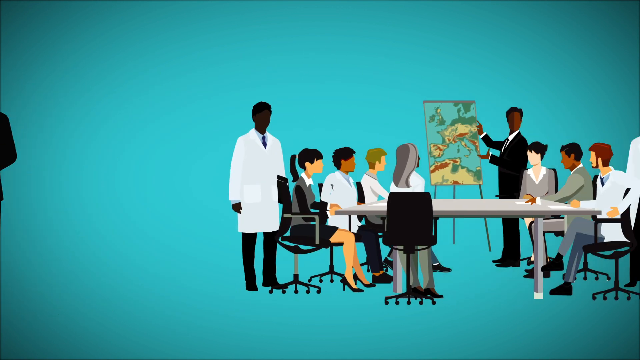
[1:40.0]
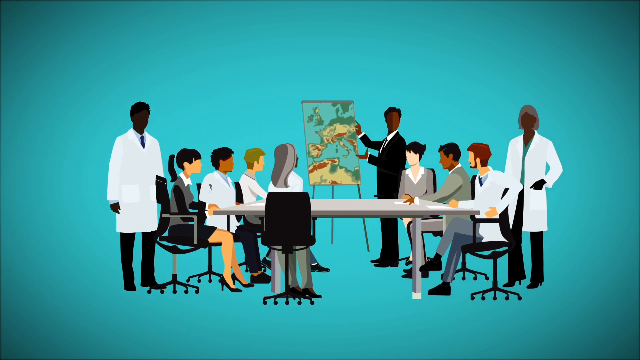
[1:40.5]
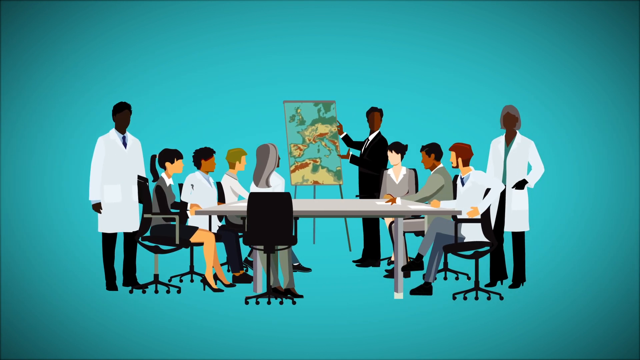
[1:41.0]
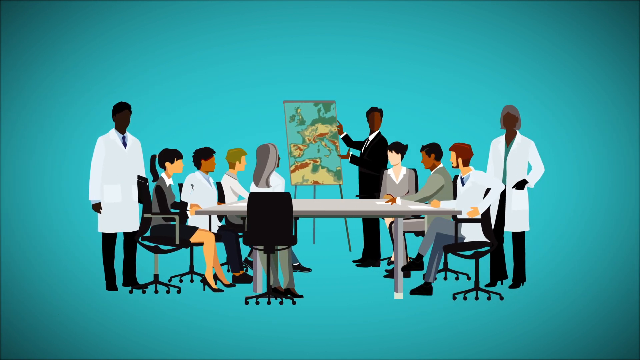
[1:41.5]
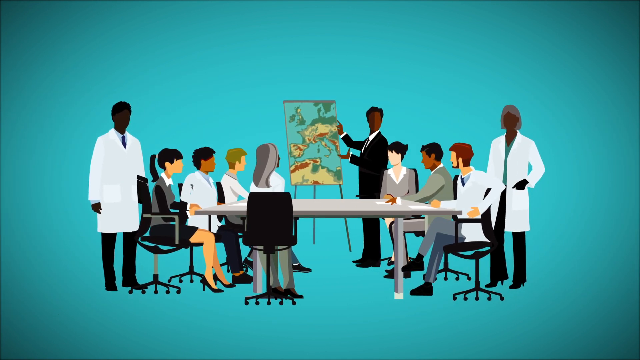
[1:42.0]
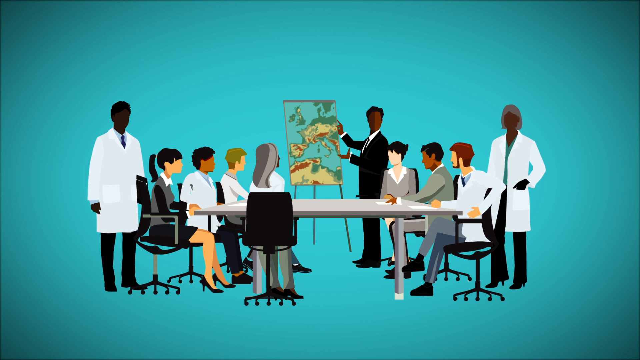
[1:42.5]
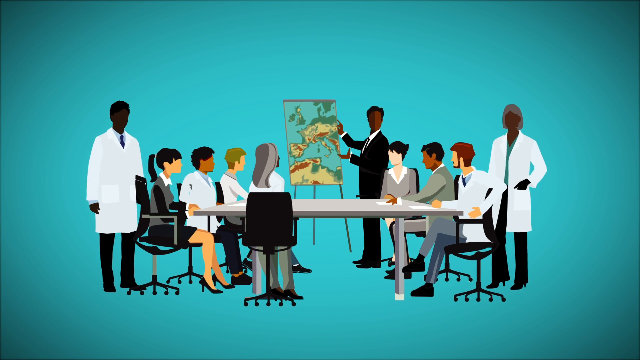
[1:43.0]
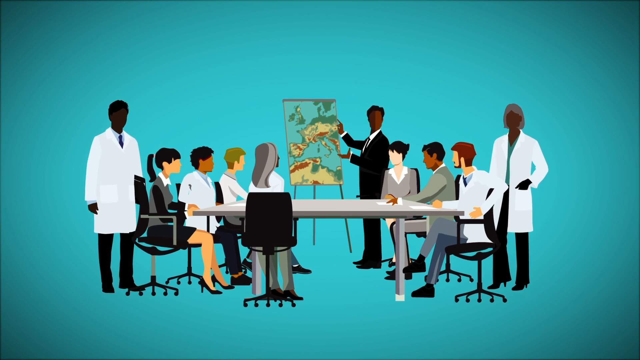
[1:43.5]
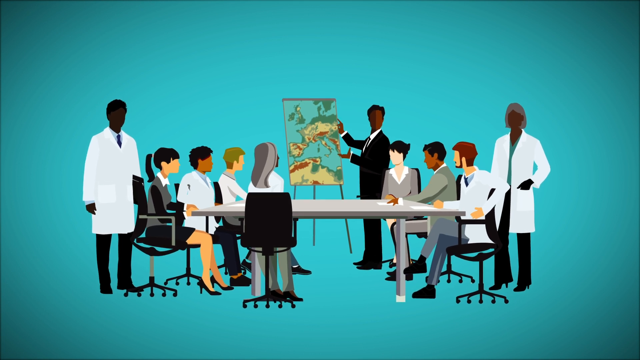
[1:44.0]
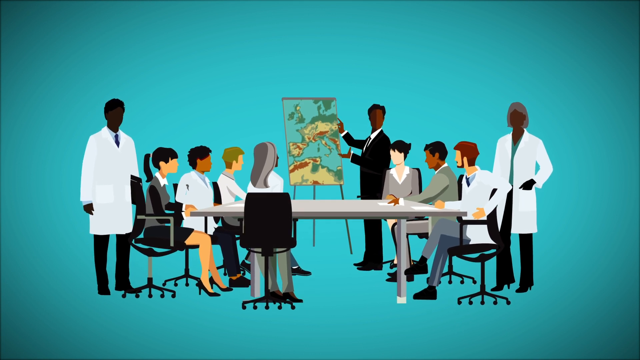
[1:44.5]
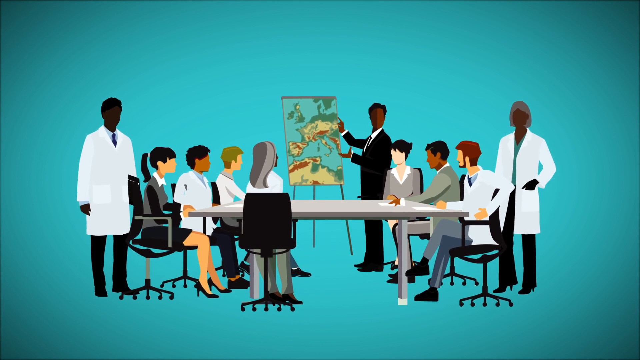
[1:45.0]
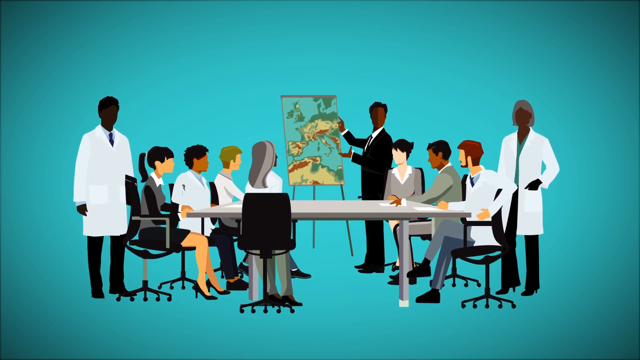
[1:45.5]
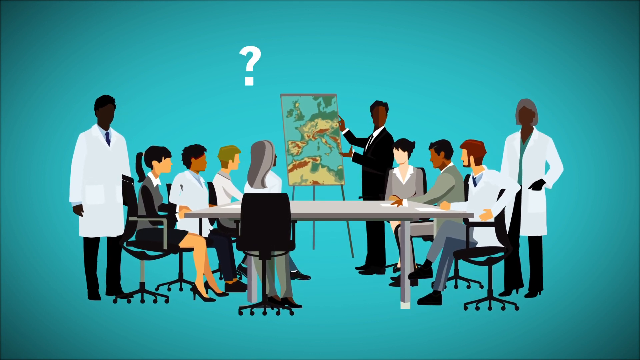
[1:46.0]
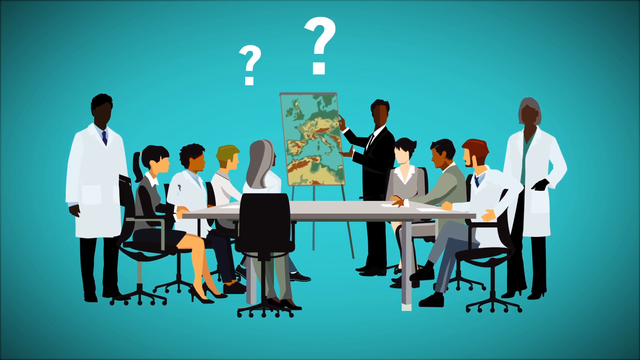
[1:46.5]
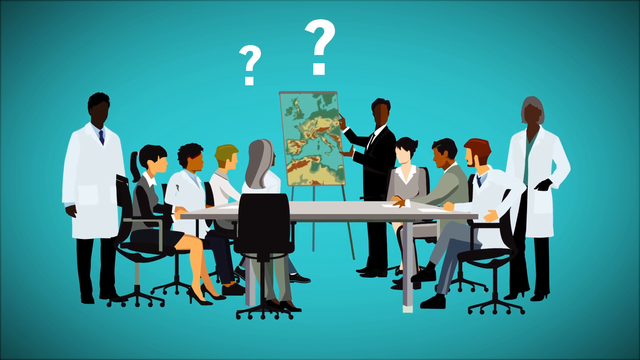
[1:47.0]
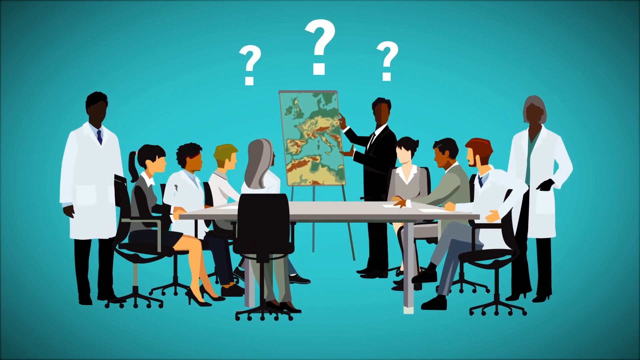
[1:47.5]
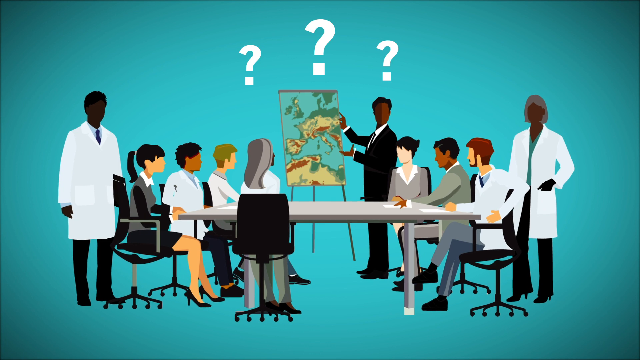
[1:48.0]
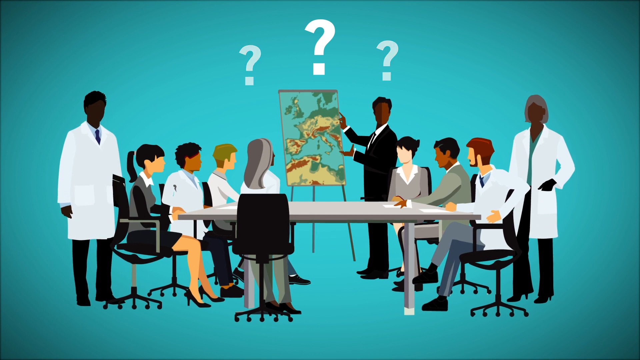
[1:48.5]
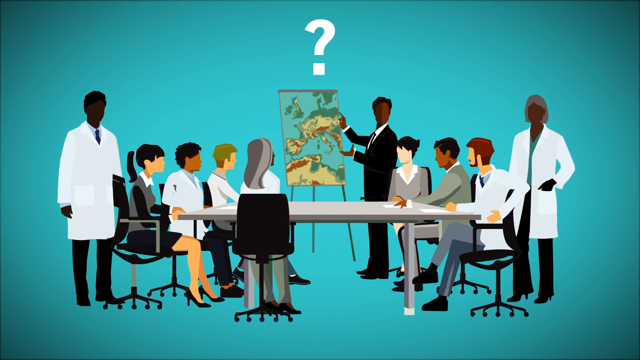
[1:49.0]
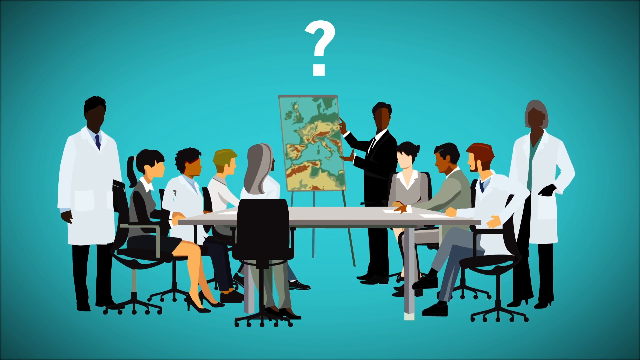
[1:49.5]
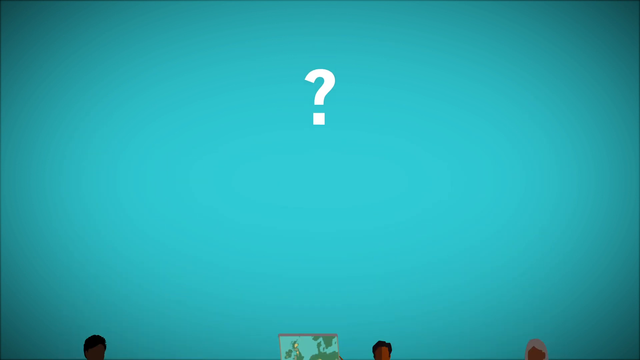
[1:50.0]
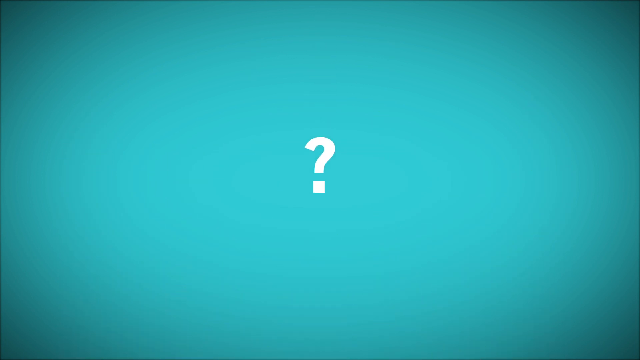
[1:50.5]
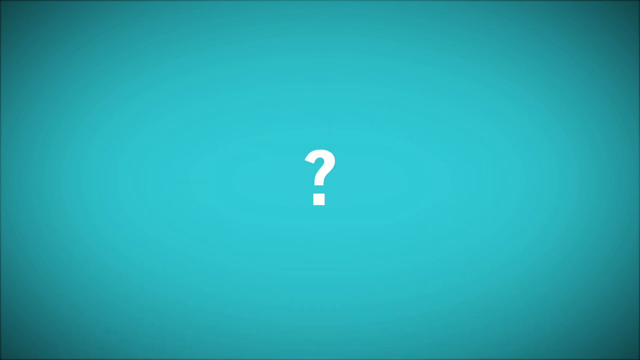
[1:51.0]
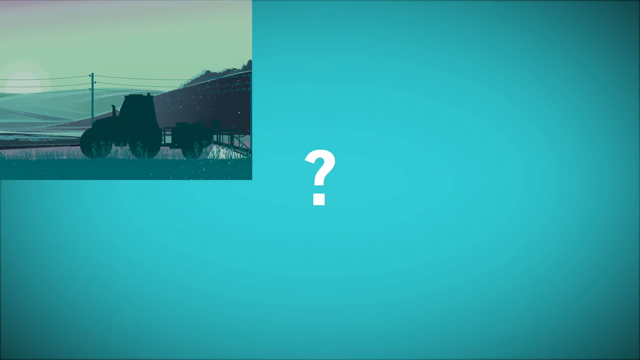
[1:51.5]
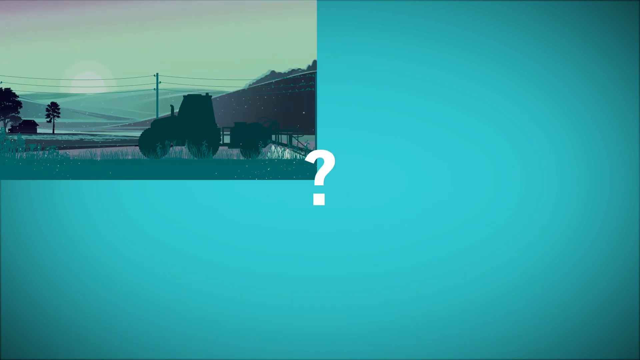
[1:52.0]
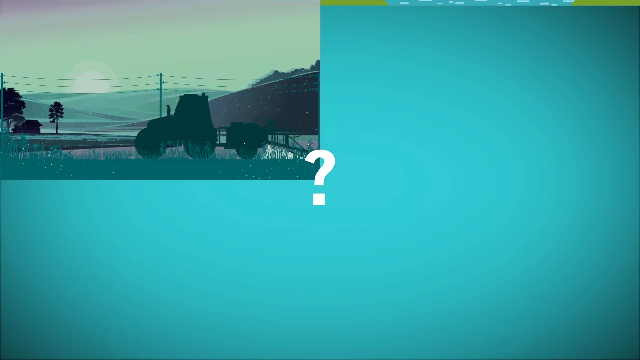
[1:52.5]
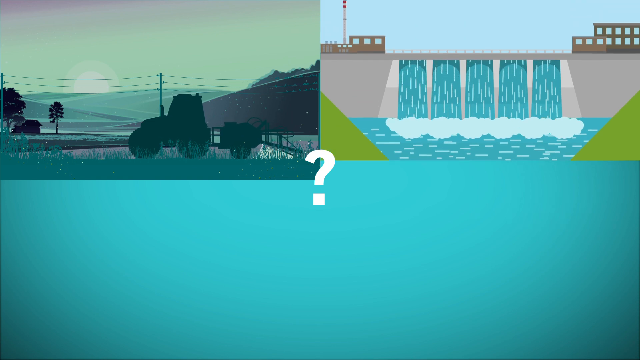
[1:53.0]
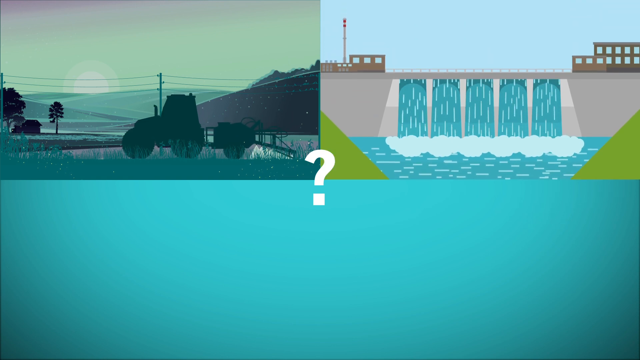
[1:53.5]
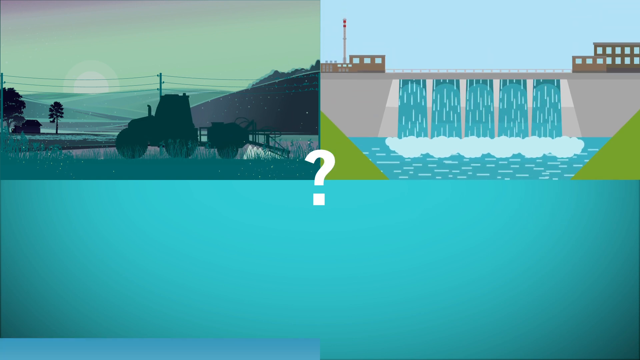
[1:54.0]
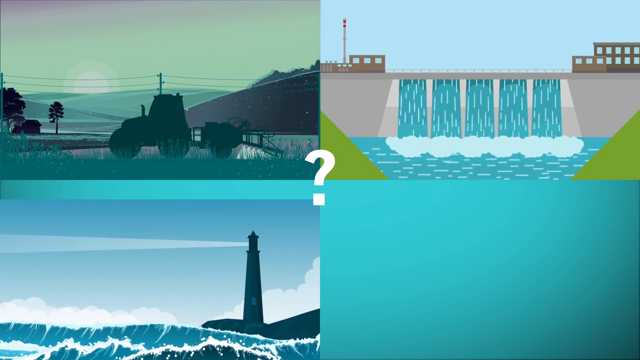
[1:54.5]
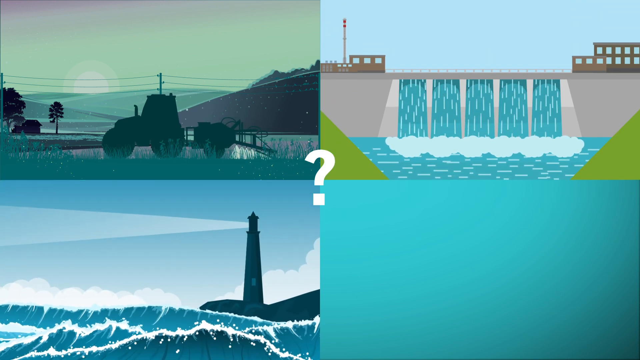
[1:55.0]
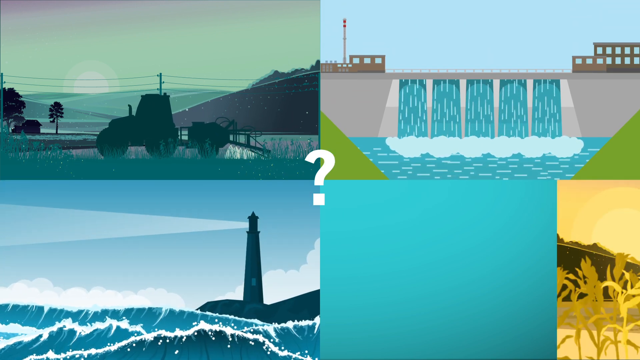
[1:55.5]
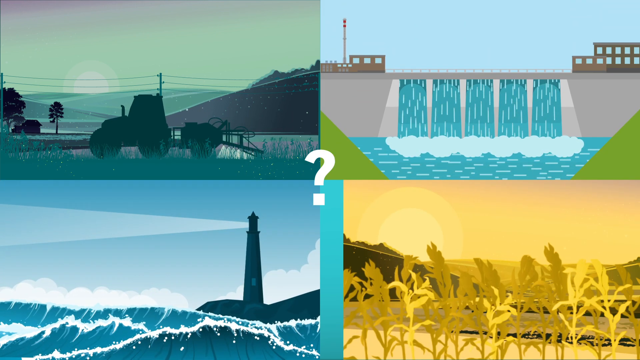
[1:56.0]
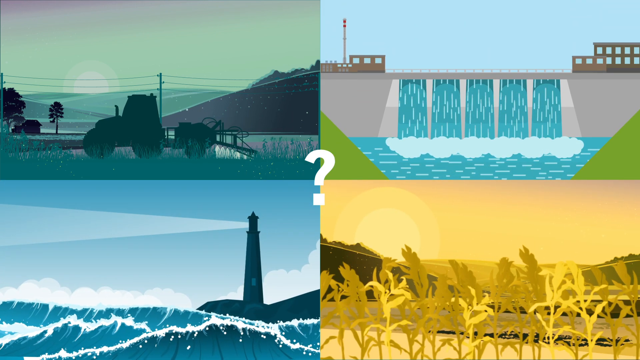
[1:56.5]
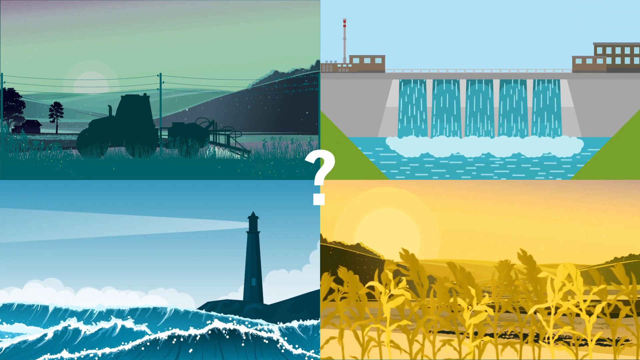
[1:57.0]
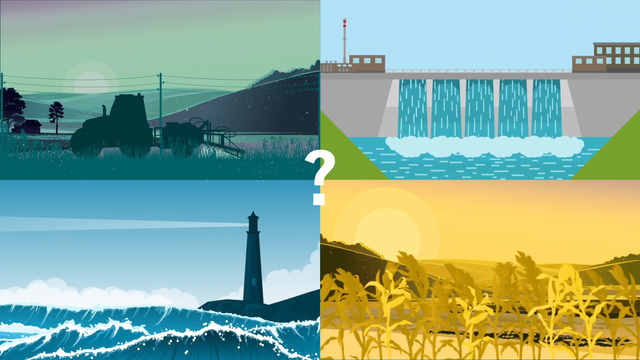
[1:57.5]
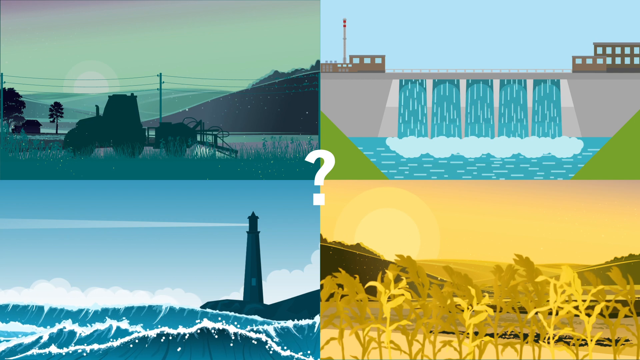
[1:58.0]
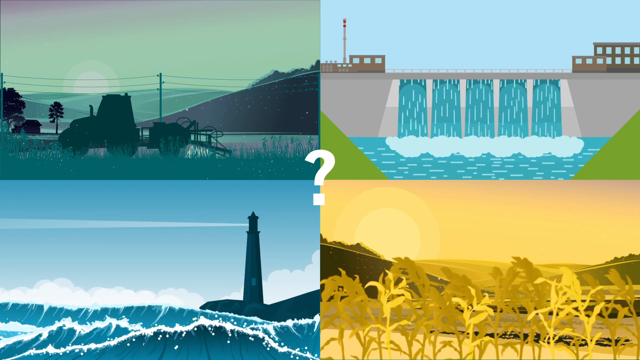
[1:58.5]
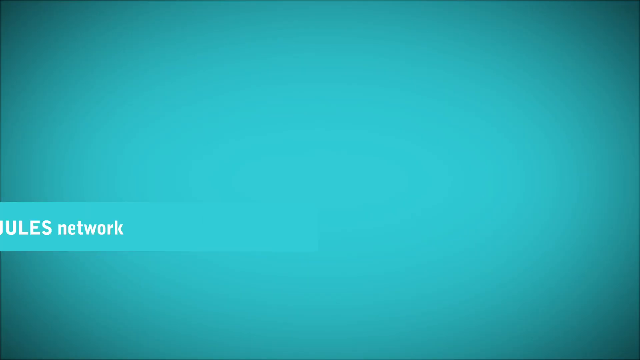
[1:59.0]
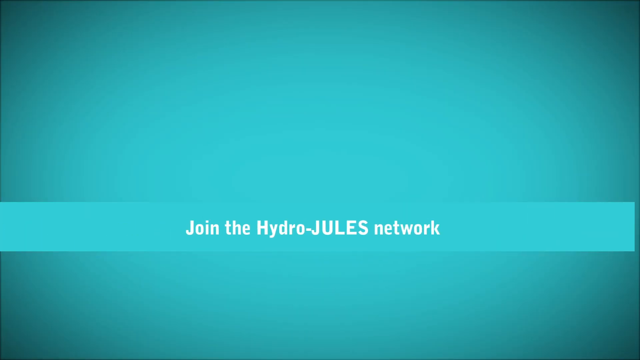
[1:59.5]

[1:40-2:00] On a blue background, cartoon-style people with no facial details are gathered around a table: ten people, two of them standing. A man at the front of the room gestures to a picture on a stand, similar to the earlier map with yellow and red spots on the land. This man appears to be dark-skinned and wears a black suit and a tie. From left to right around the table: a dark-skinned man in a coat and black pants; an Asian woman sitting in a chair, wearing a gray vest, black shirt, black skirt and black shoes, with her hair in a ponytail; a man who appears to be African-American, in a white coat and black pants, with what looks like natural curly hair; a person who appears to be white with blonde hair, in a white coat and gray pants; a woman seen only from the back of her head, with longer gray hair, wearing a white coat and maybe gray pants; in the middle, the man pointing at the picture on the stand; a light-skinned woman in a gray suit; a man, maybe Indian, in a gray suit; a white man with facial hair in a white jacket and blue pants, sitting in a chair with his legs crossed; and a dark-skinned woman standing, wearing a white jacket and black pants. A series of question marks appears above them, and one question mark stays on screen and moves to the middle. Four pictures then come in from different sides. The top left appears to show a combine, a large farm vehicle, maybe putting water down. The top right shows a gray dam with five waterfalls falling out of it. The bottom left shows a lighthouse shining light to the left. The bottom right is a primarily yellow picture with wheat. The white question mark remains in the middle.